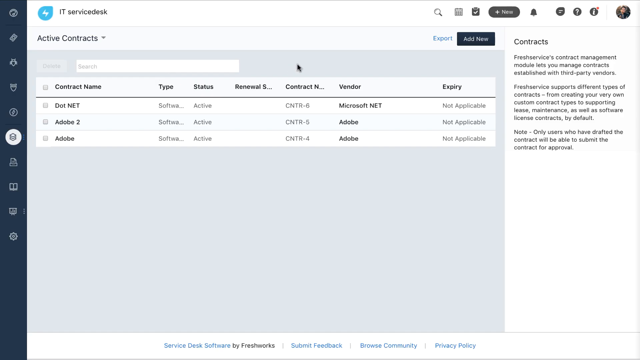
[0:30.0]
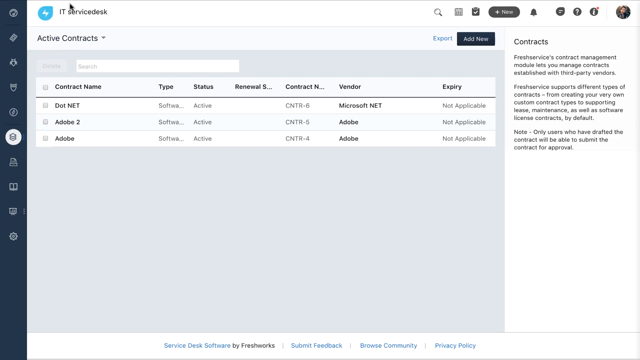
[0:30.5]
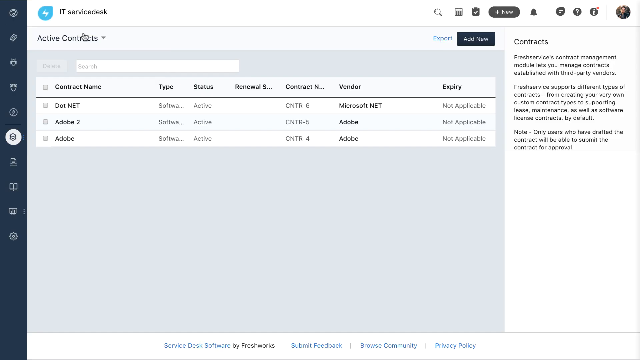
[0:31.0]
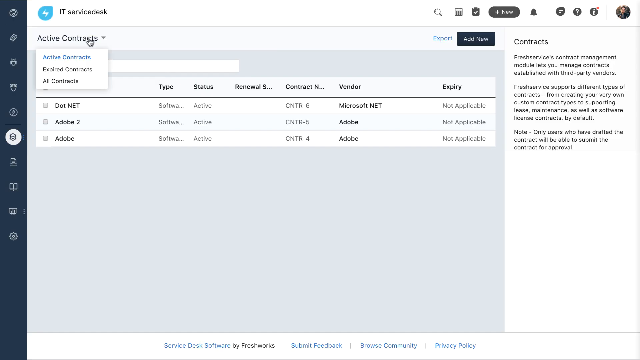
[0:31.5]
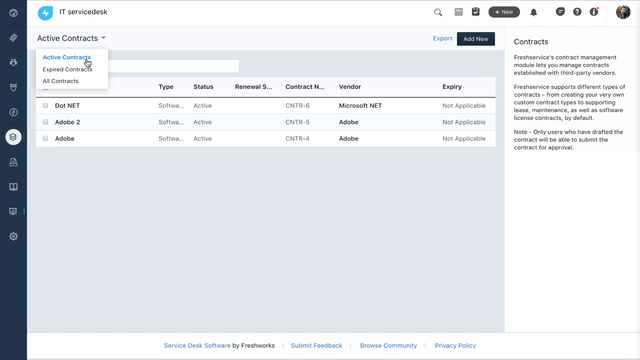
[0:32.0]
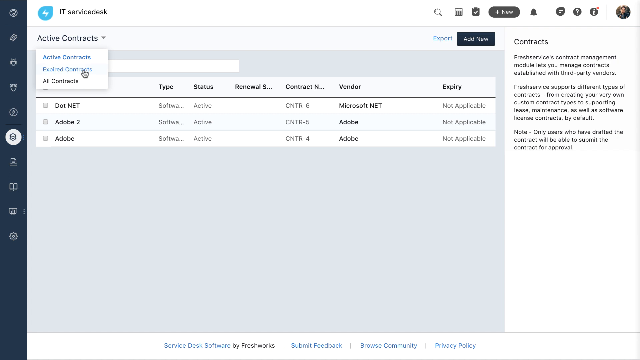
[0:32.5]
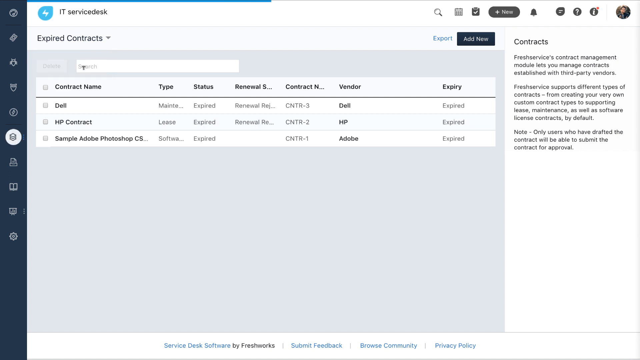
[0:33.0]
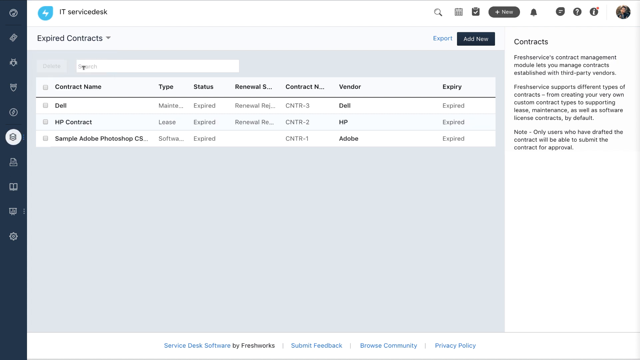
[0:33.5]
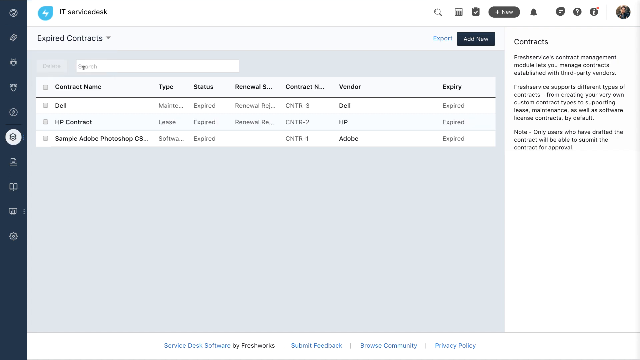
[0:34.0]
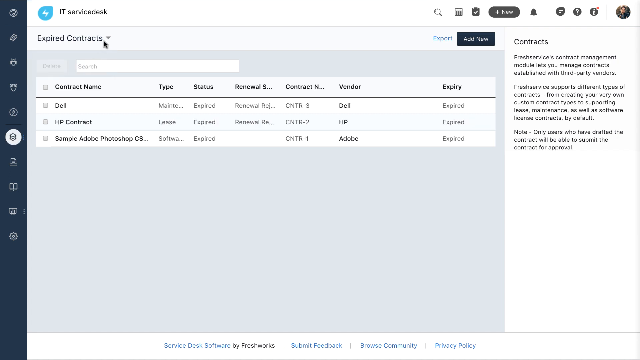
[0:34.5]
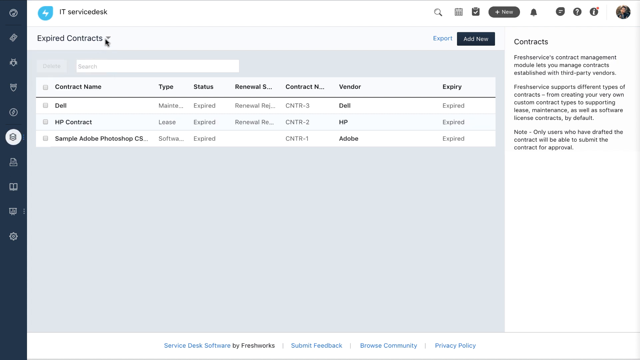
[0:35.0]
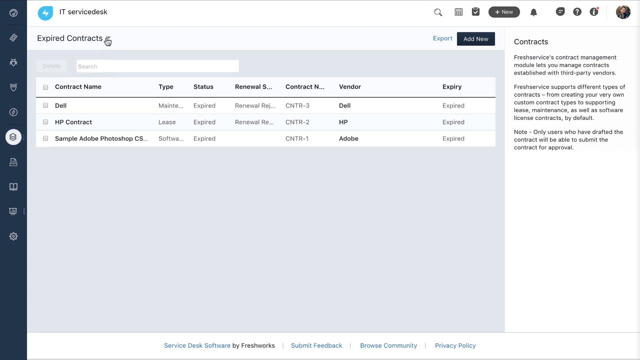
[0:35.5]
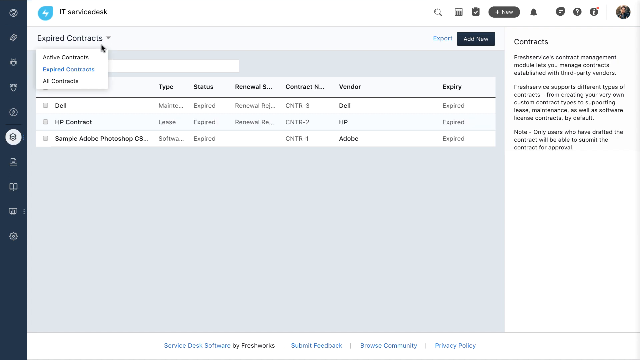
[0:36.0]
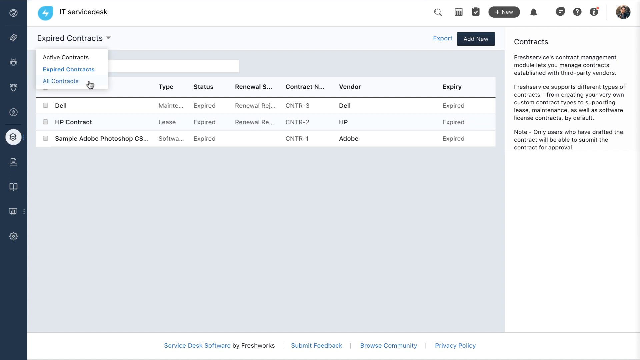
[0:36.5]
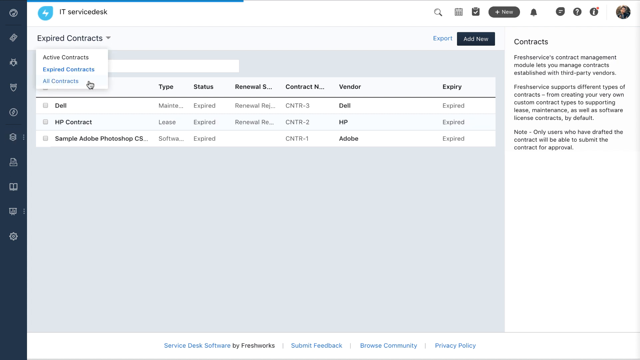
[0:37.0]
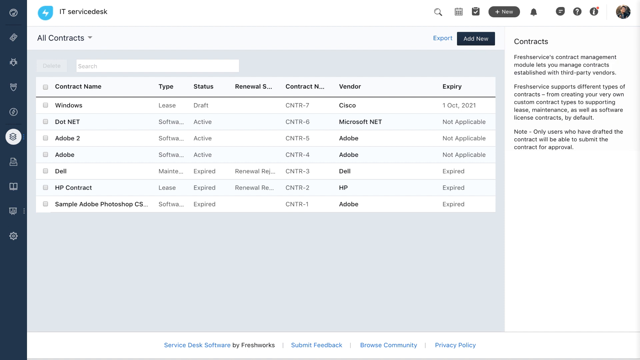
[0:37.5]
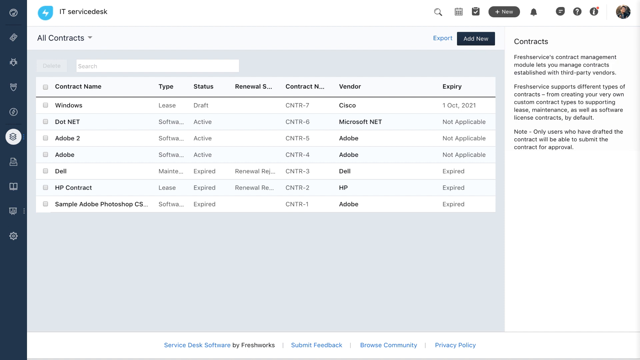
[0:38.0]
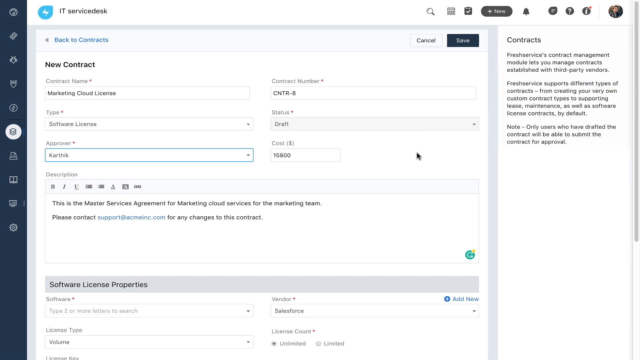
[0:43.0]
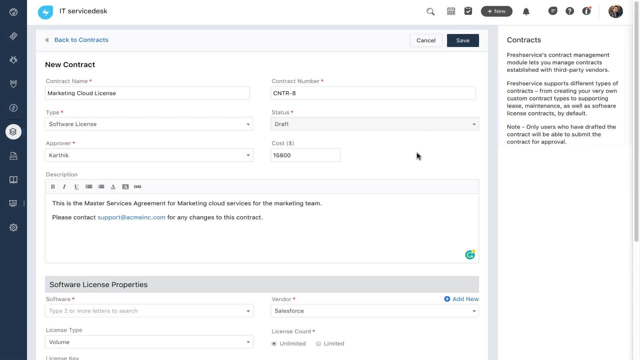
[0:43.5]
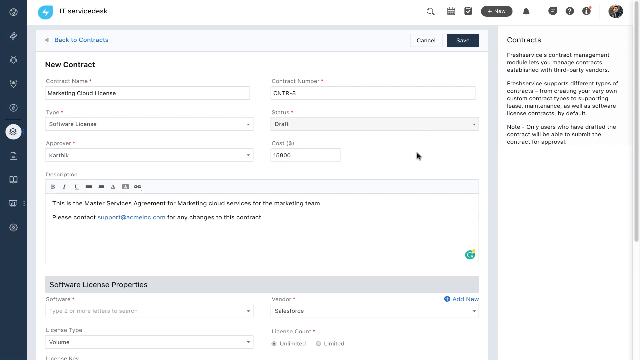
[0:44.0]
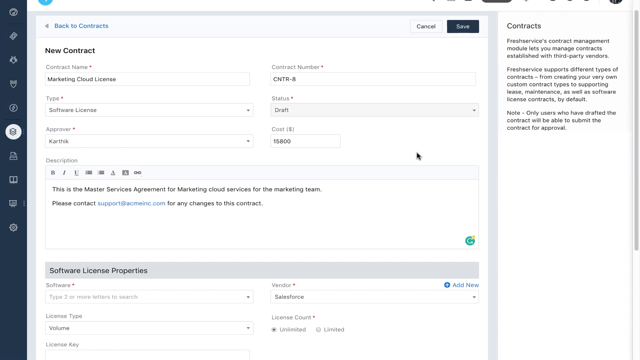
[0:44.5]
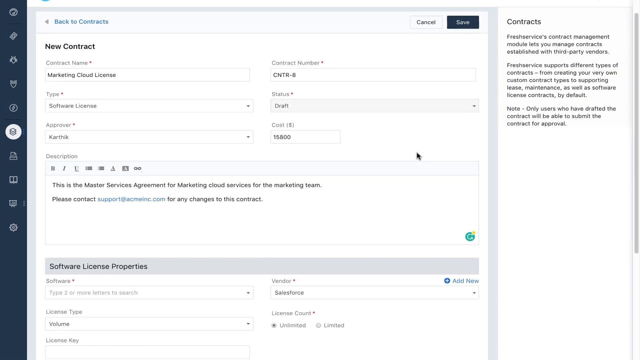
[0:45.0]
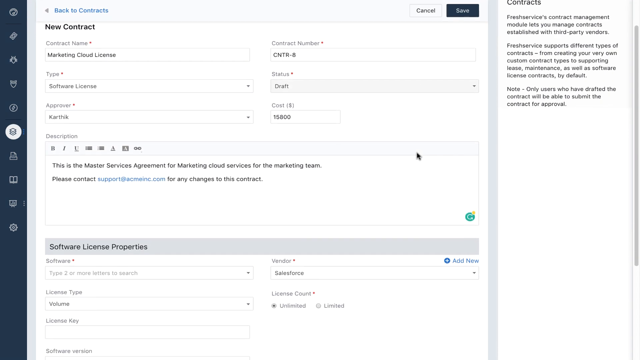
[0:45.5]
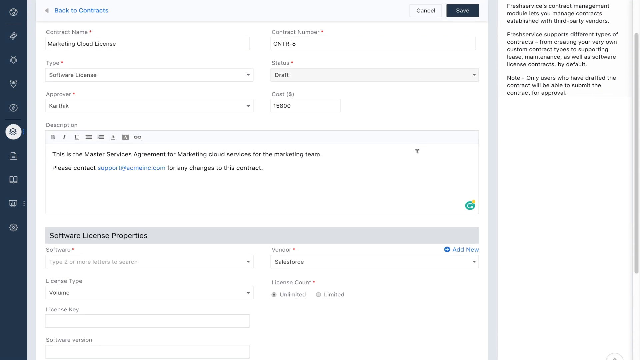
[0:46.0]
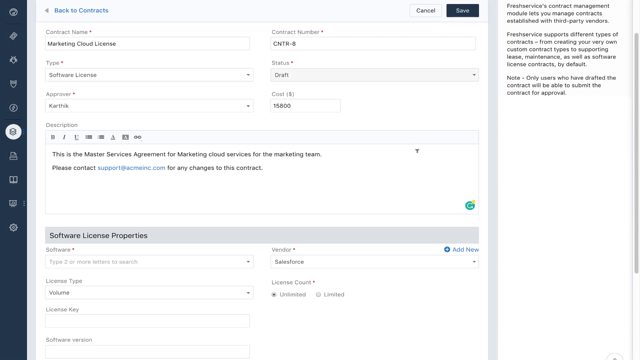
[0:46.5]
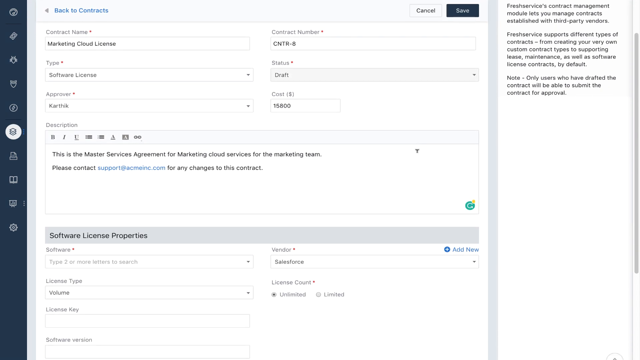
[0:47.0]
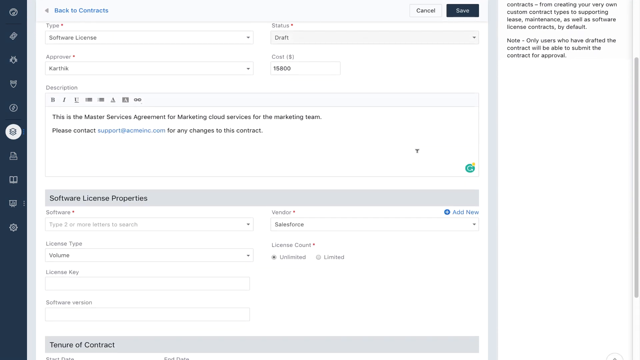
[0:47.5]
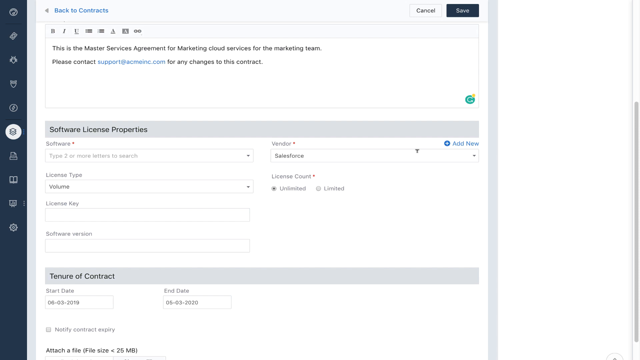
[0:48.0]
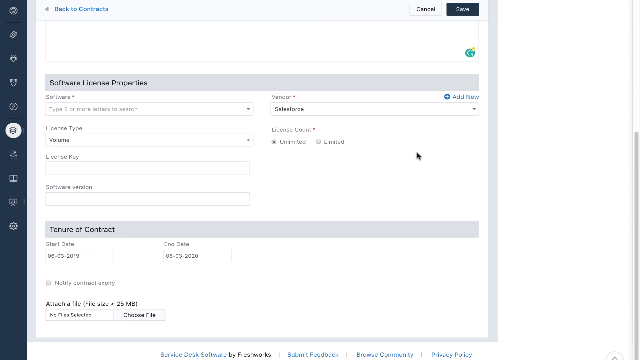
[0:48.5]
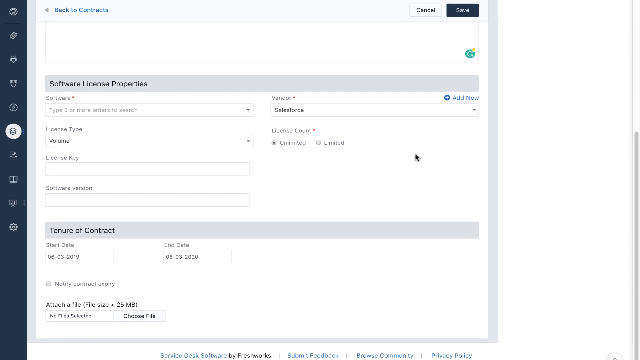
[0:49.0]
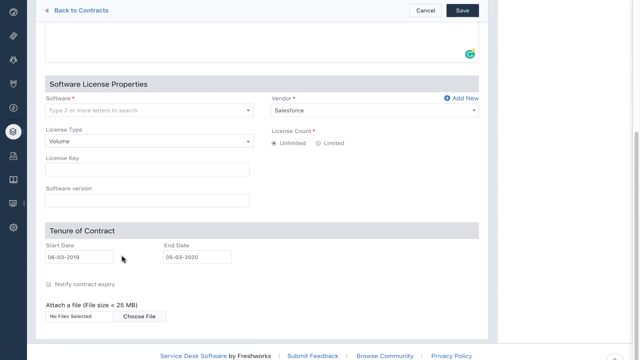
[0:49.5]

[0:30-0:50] In the Fresh Service app, plenty of buttons and menus run down the left side. The user clicks the sixth button, IT service, and then active contracts. A table of active contracts has columns for contract name, type, status, renewal, contract number, vendor and expiry. On the right side, contract details read: "Fresh service contract management module lets you manage contracts established with third party vendors. Fresh service supports different types of contracts, from creating your very own custom contract types to supporting lease, maintenance as well as software license contracts by default. Note, only users who have drafted the contract will be able to submit the contract for approval." The user clicks on contract number 5 and scrolls down a bit on the opened contract, named CNTR-5.